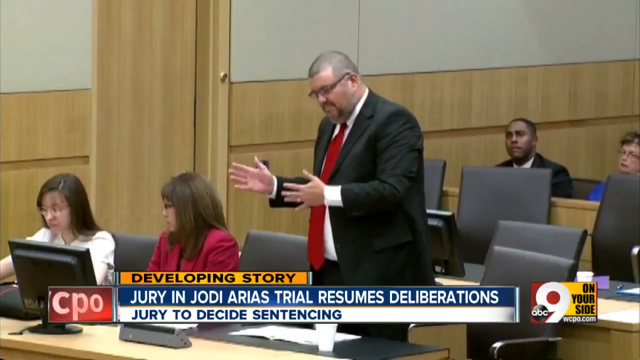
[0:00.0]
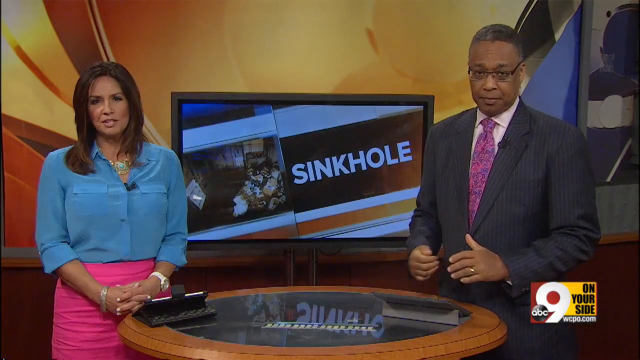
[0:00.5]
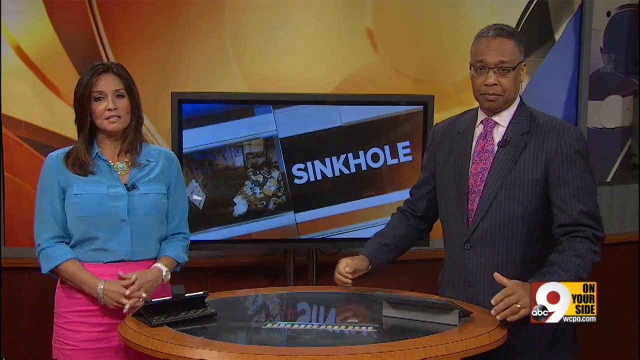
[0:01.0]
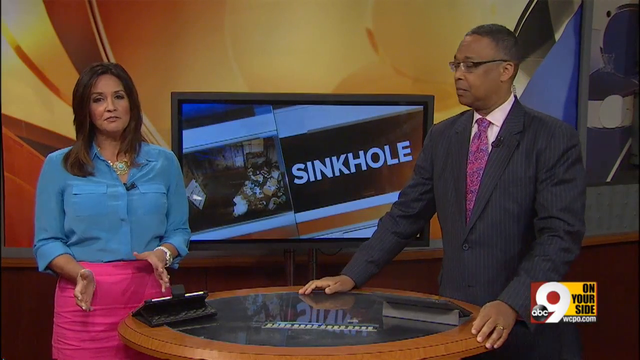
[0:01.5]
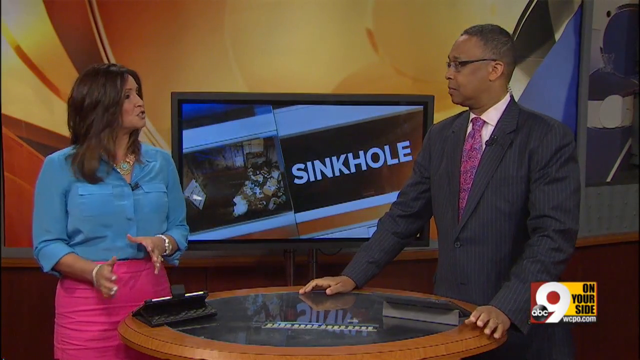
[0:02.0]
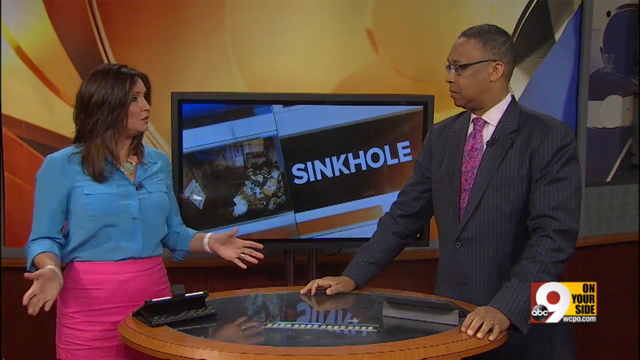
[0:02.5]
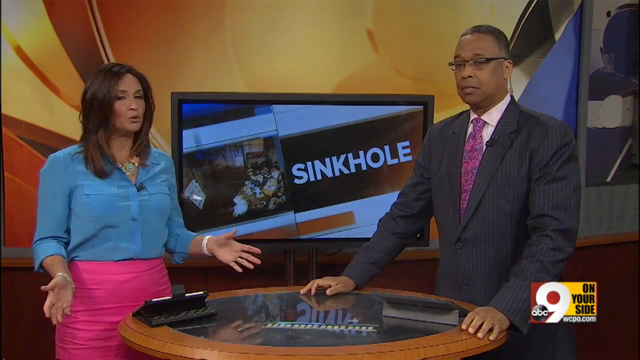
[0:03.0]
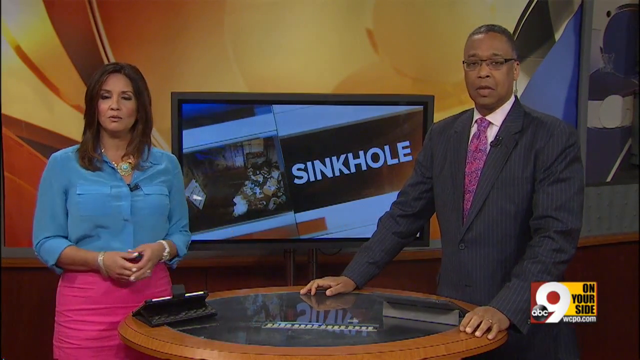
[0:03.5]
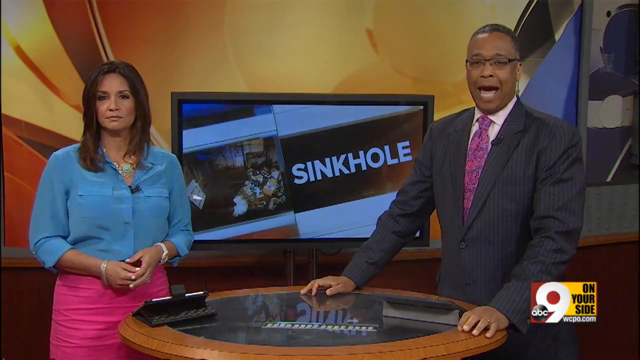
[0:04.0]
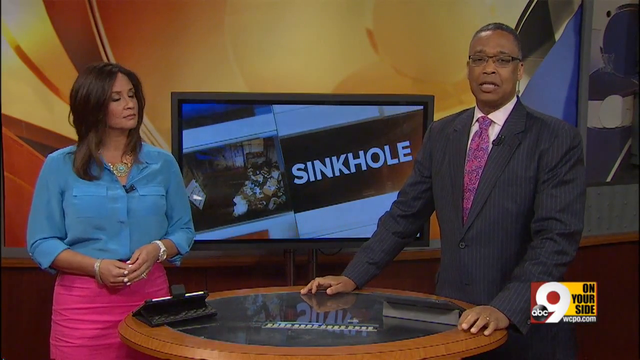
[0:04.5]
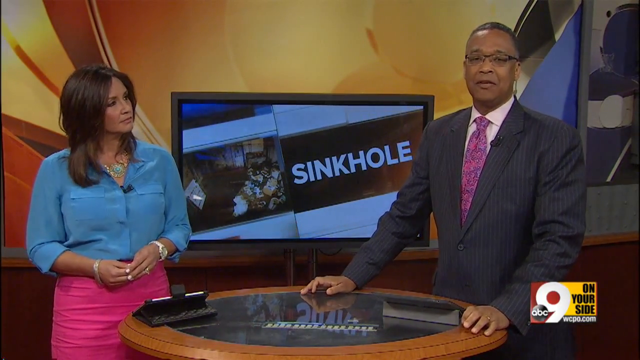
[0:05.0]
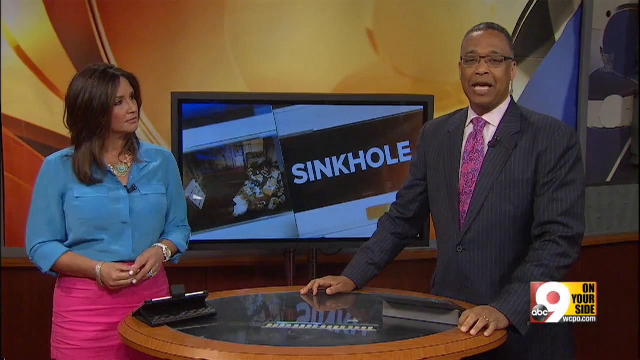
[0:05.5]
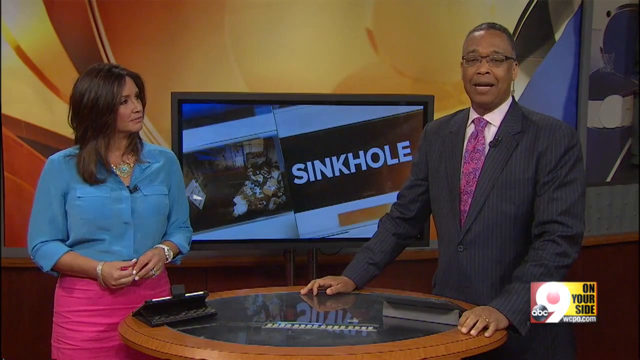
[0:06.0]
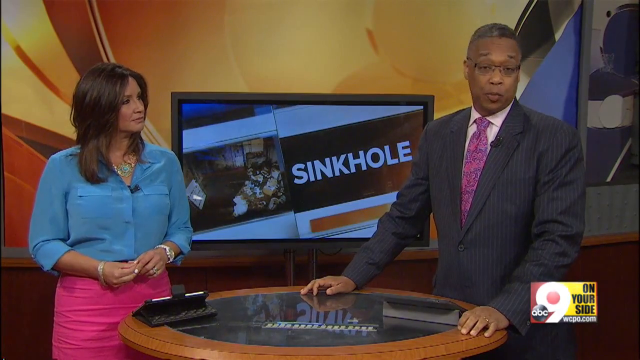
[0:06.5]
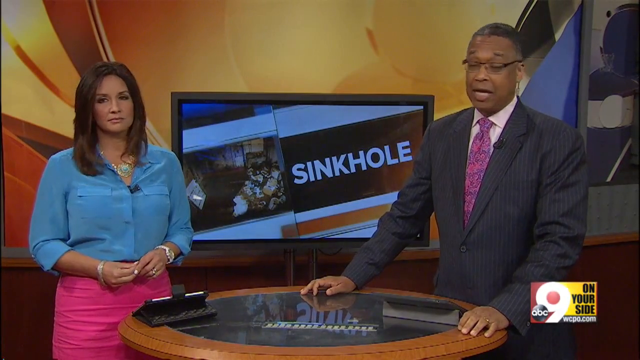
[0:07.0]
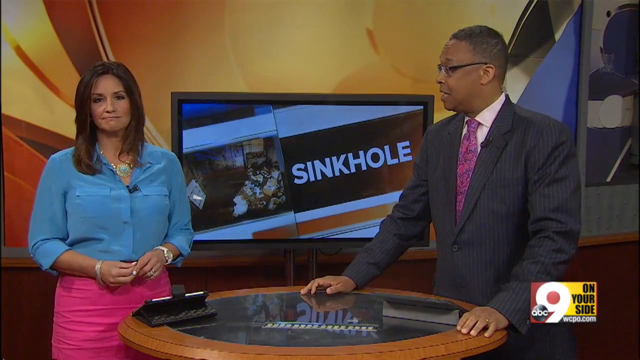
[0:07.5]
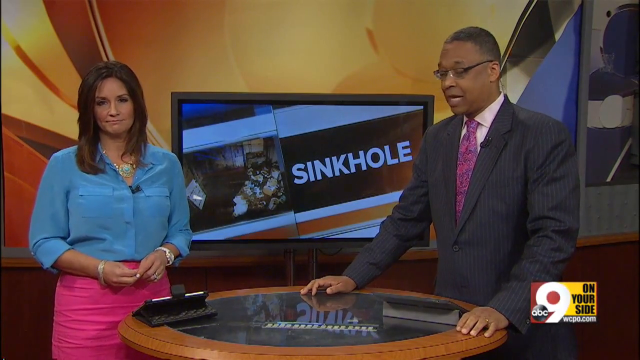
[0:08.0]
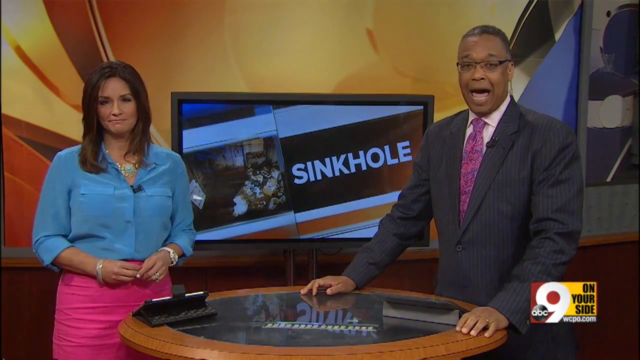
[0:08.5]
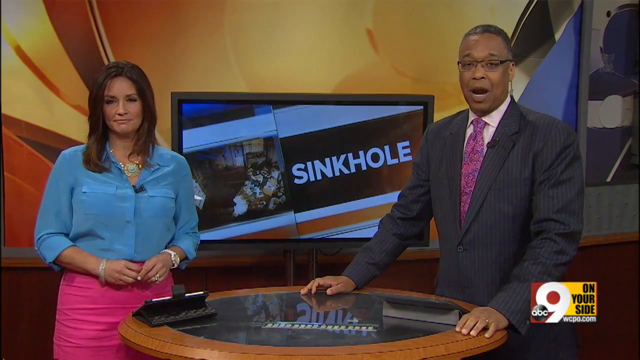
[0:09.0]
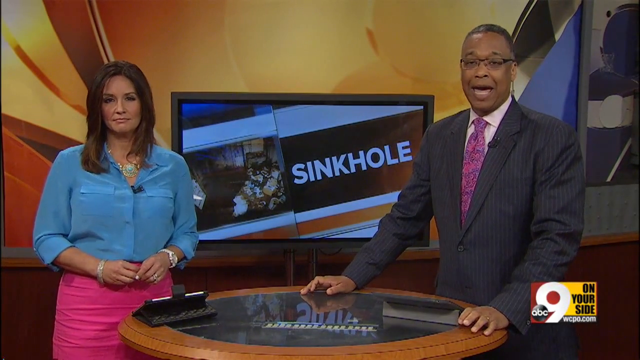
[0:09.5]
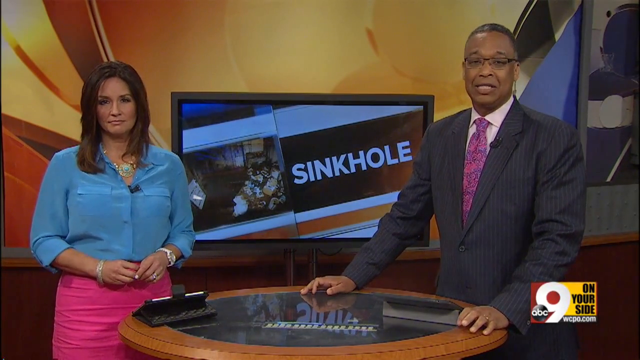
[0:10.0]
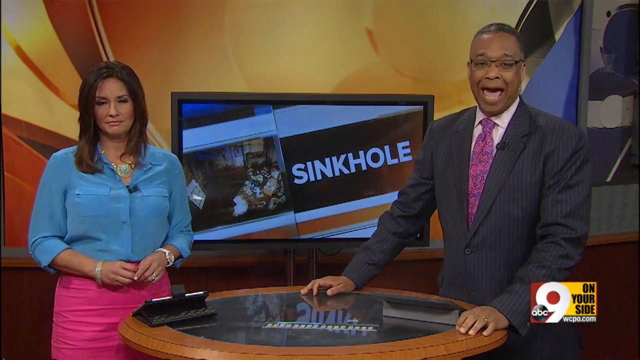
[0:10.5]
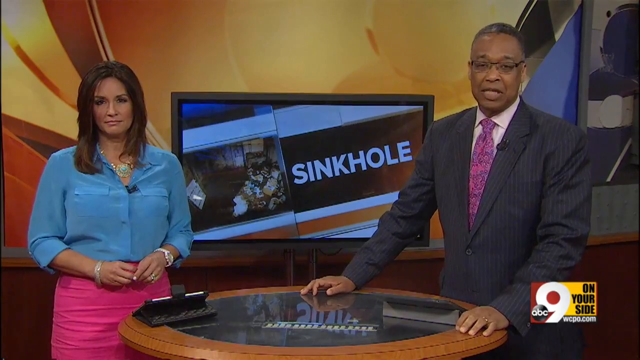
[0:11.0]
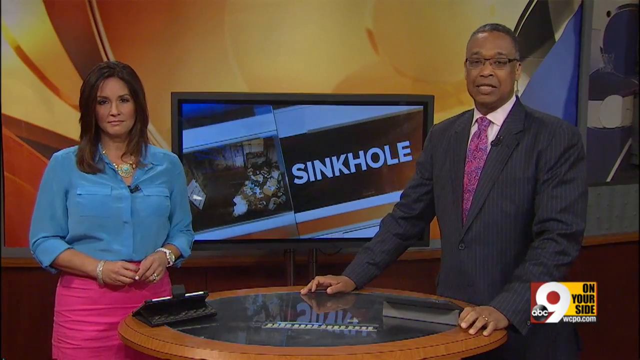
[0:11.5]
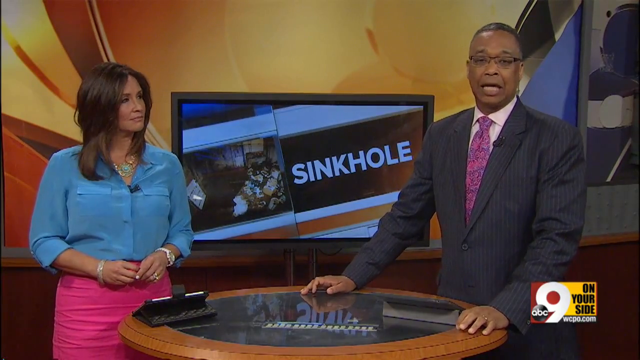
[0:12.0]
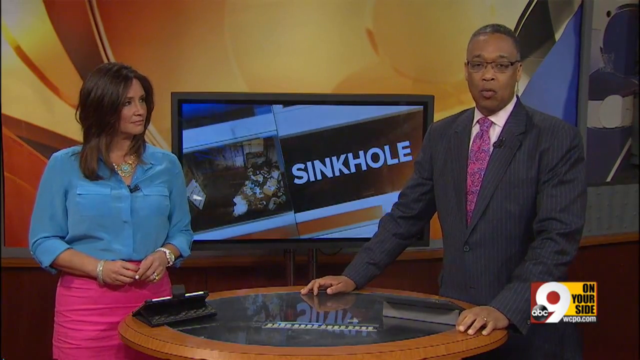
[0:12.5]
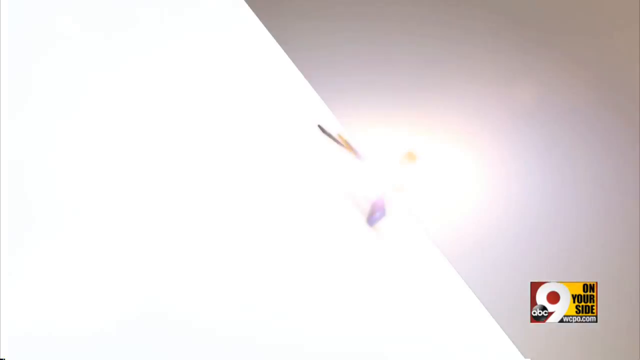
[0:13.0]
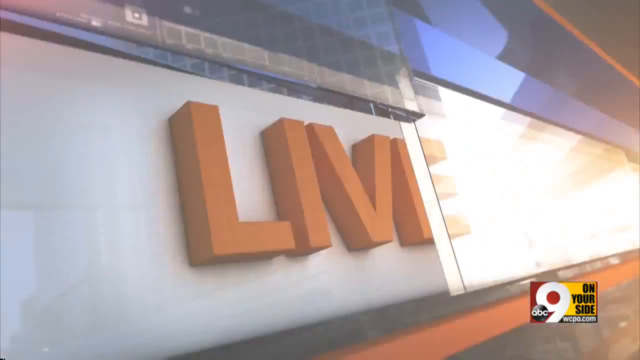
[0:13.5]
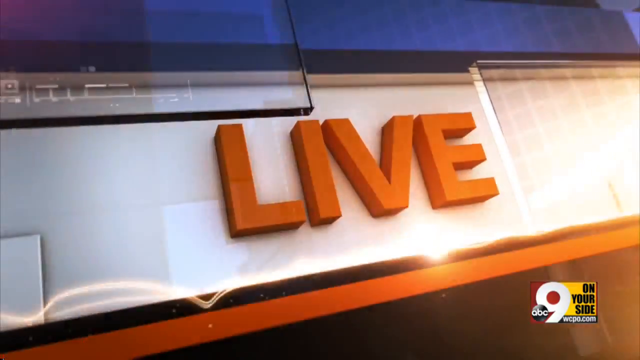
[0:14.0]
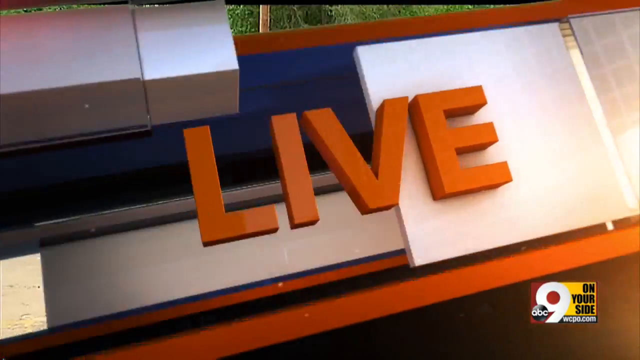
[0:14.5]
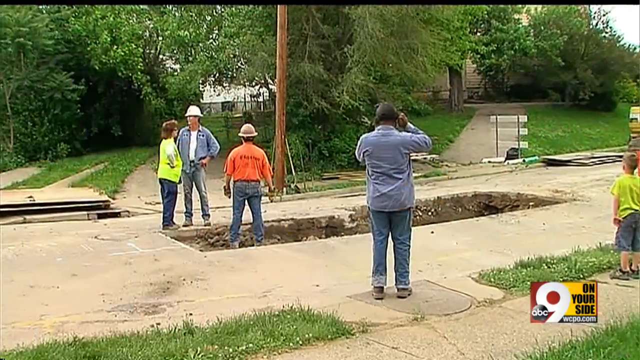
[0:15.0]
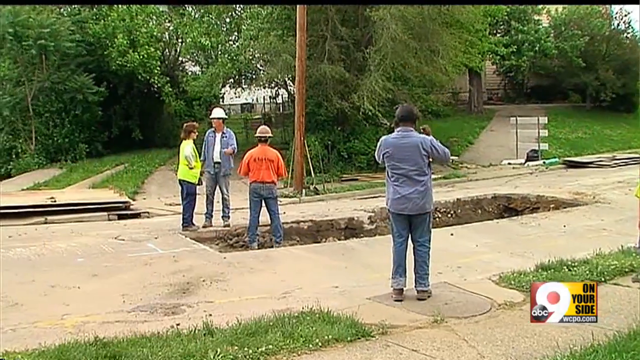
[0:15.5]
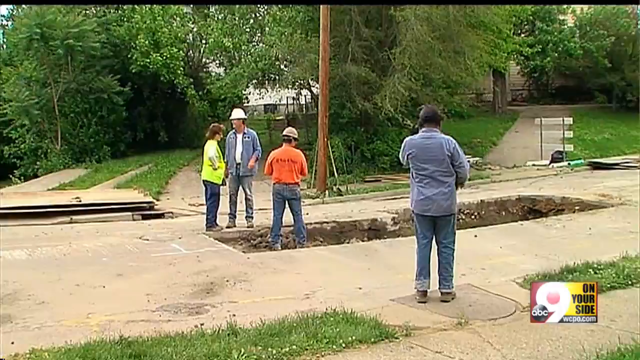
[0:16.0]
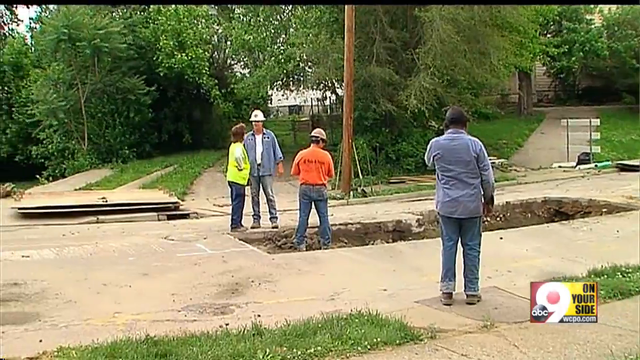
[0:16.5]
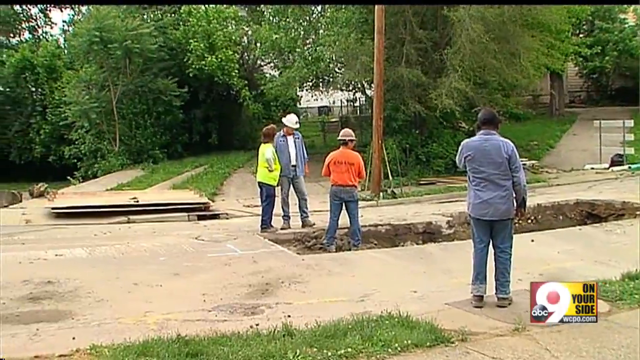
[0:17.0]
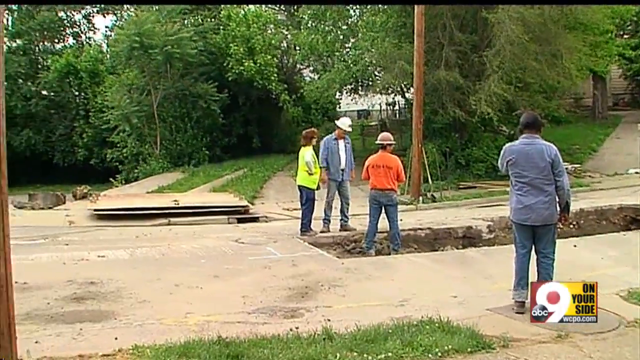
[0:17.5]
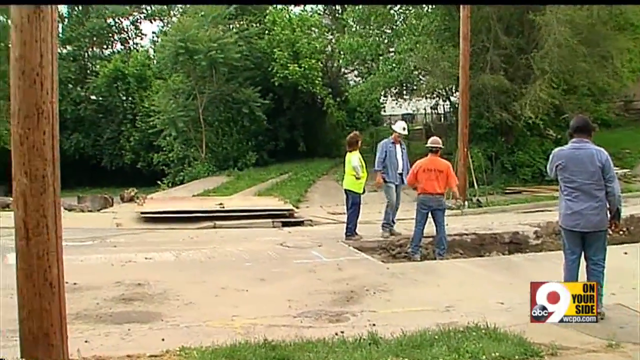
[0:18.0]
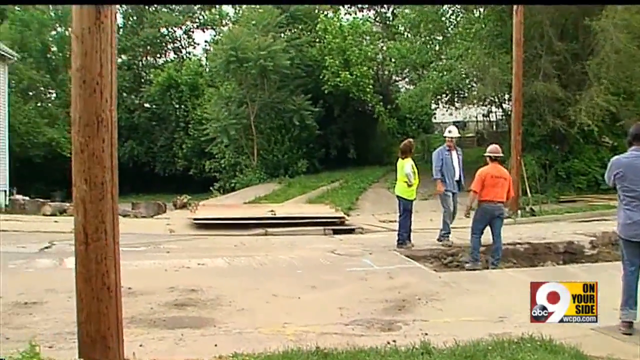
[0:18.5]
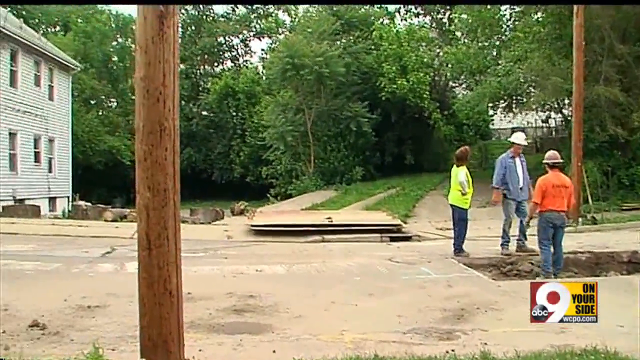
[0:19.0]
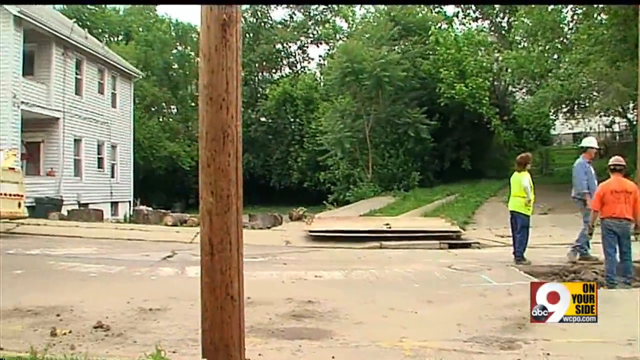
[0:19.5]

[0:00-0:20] A heavyset man with a goatee and a shaved head stands with his hands in front of him, wearing a black suit, a white shirt and a red tie. An on-screen caption for a developing story indicates that the jury in Jodi Arias's trial resumes deliberation. The scene moves to two newscasters on screen: a white woman in a light blue shirt and pink blouse, her hands extended and her manner casual, next to a Black man in a black suit with a purple tie and a pinkish white shirt, who looks very deliberate and proper. The screen behind them shows the word "sinkhole", and the channel airing the broadcast is channel 9 ABC On Your Side. The story then shifts from the trial to a shot of a neighborhood where a sinkhole has opened up in the street.